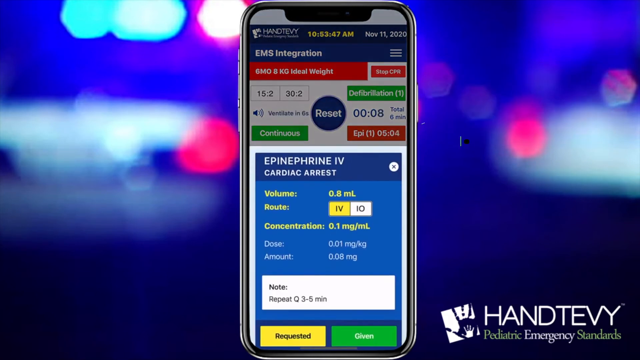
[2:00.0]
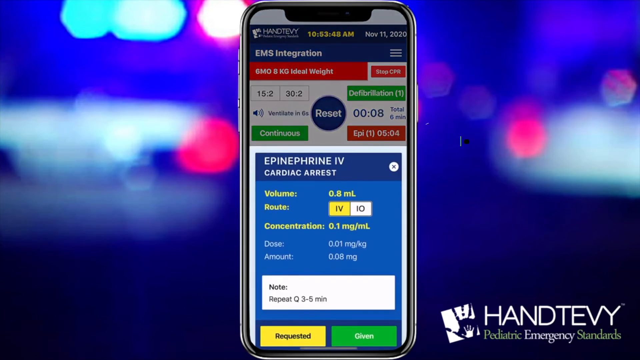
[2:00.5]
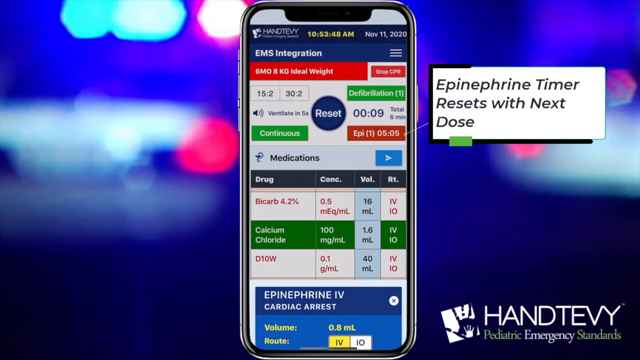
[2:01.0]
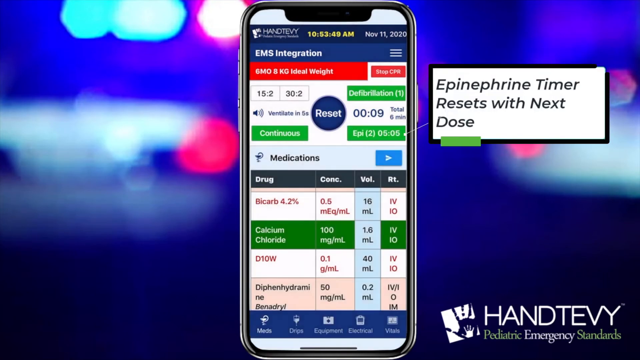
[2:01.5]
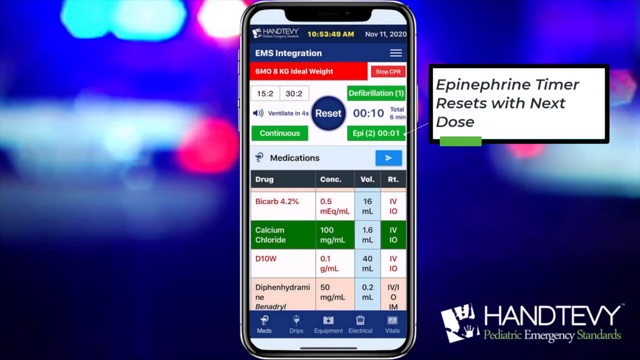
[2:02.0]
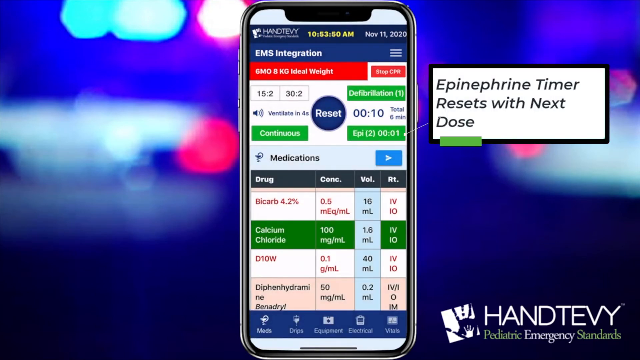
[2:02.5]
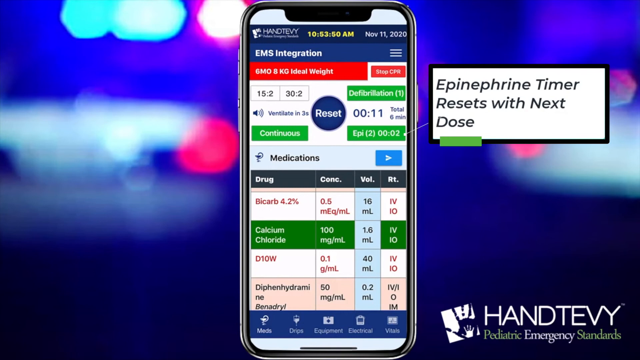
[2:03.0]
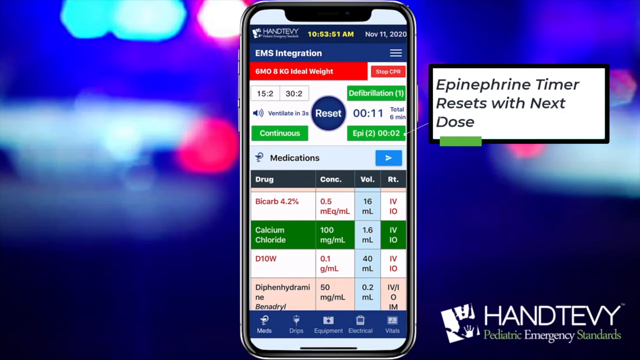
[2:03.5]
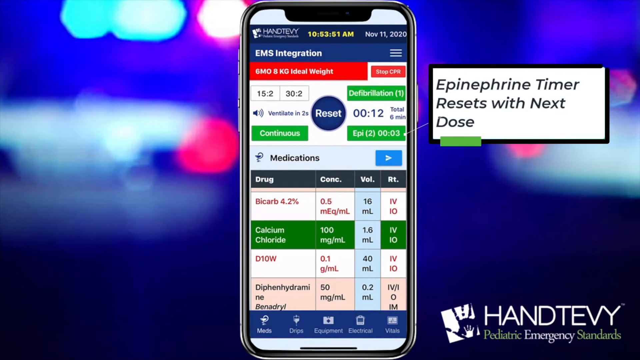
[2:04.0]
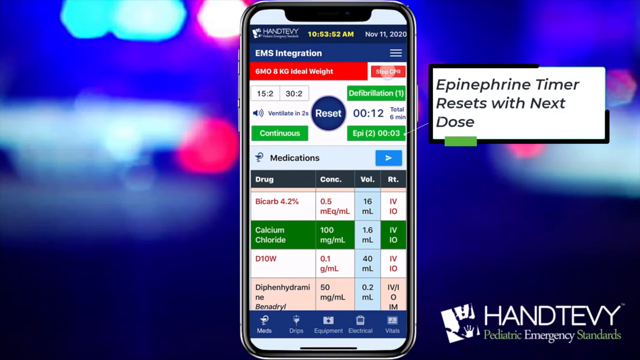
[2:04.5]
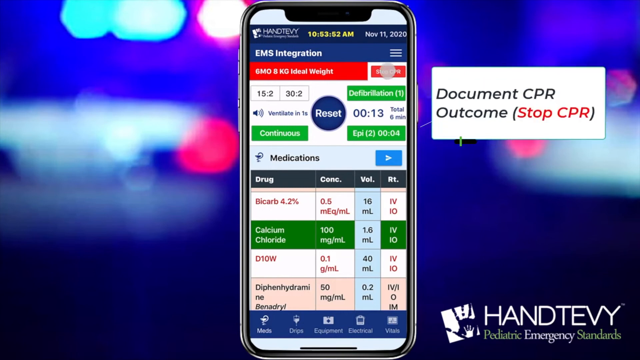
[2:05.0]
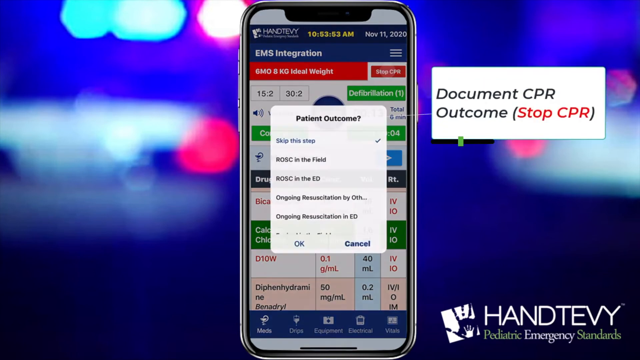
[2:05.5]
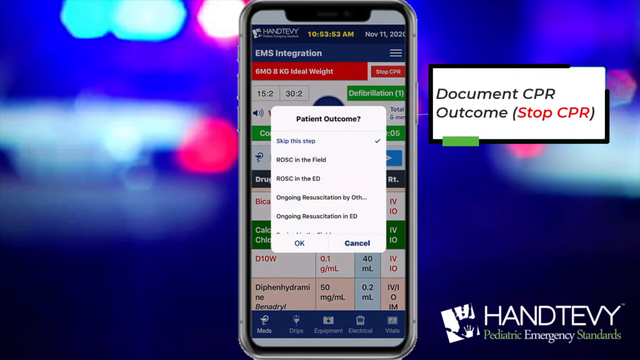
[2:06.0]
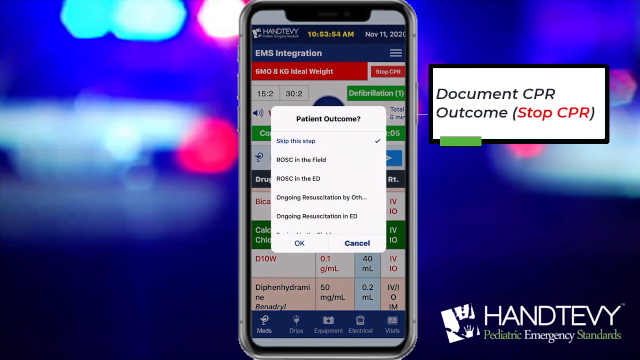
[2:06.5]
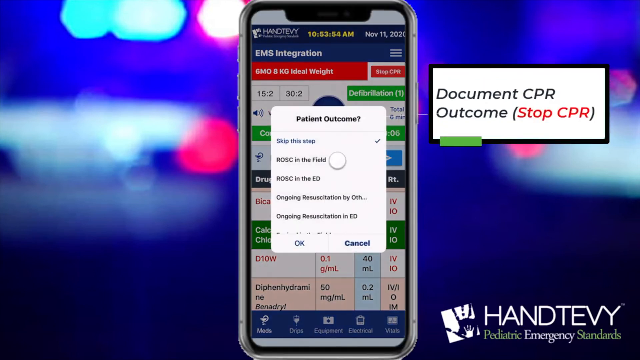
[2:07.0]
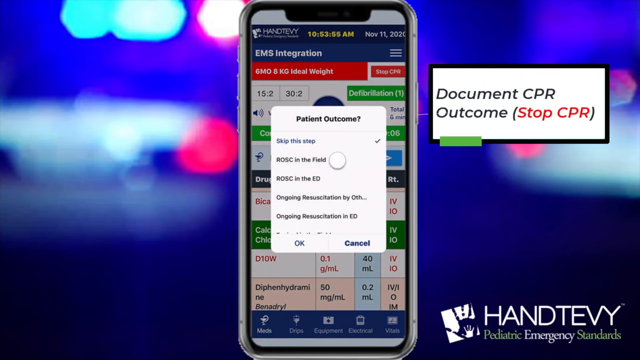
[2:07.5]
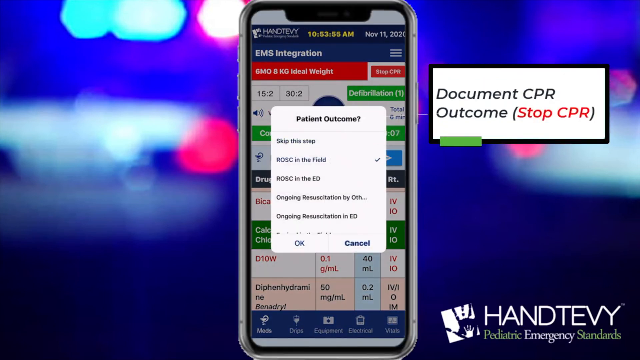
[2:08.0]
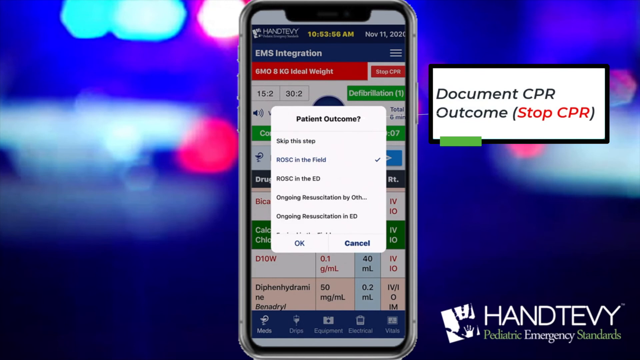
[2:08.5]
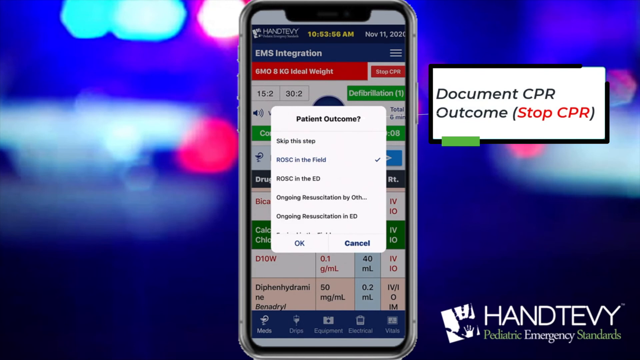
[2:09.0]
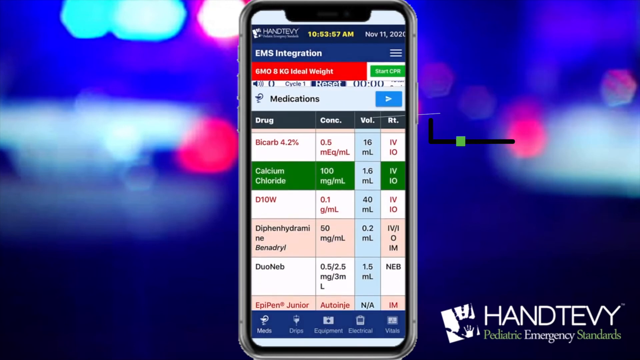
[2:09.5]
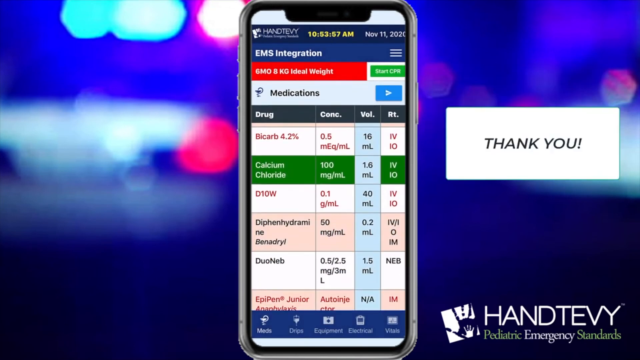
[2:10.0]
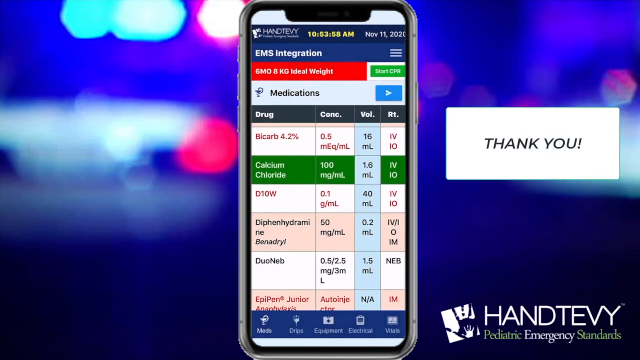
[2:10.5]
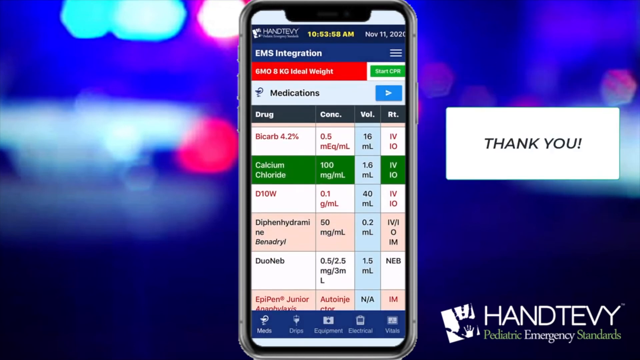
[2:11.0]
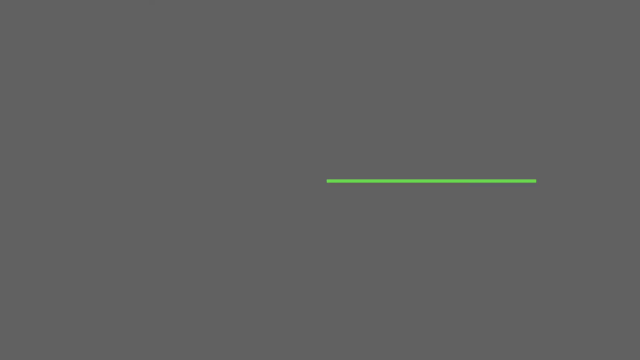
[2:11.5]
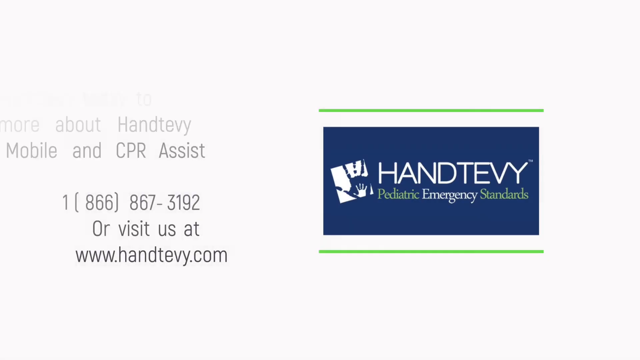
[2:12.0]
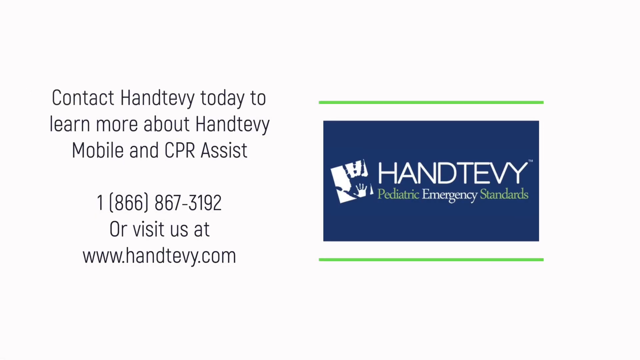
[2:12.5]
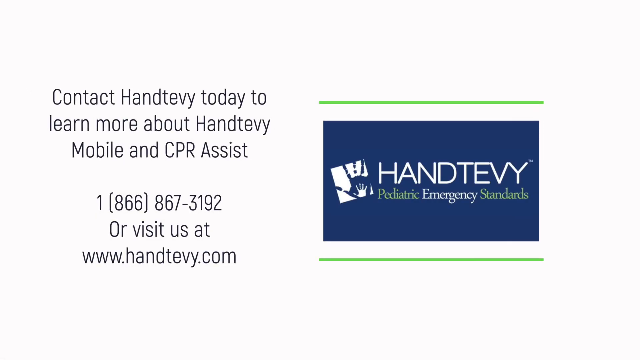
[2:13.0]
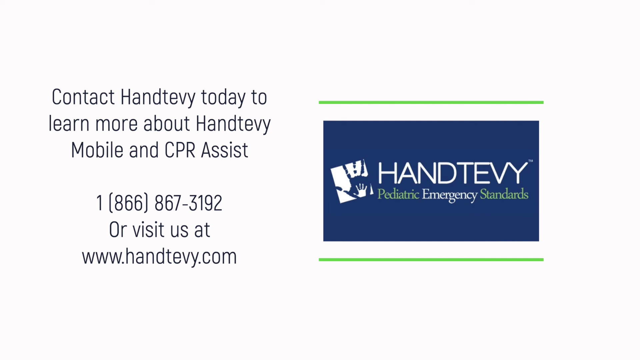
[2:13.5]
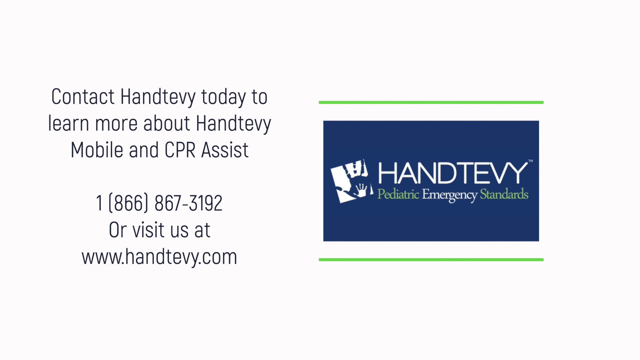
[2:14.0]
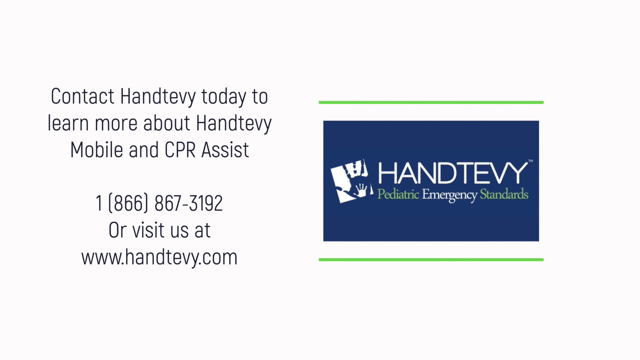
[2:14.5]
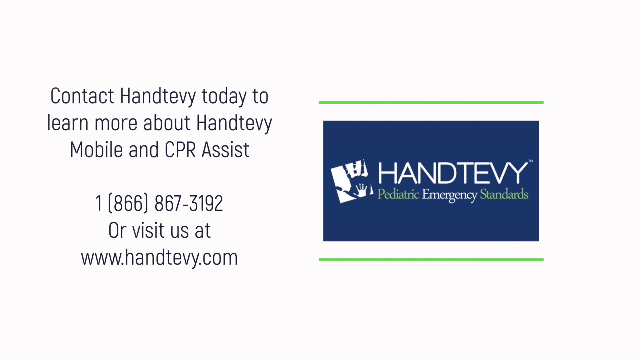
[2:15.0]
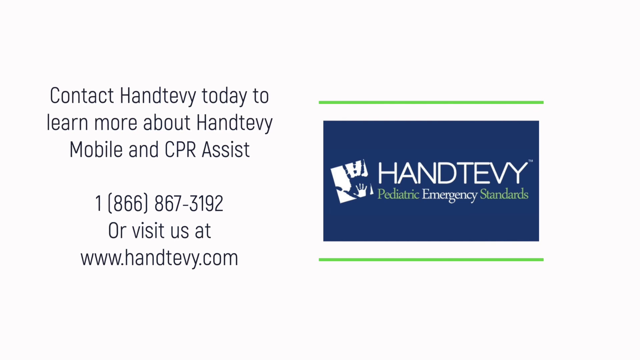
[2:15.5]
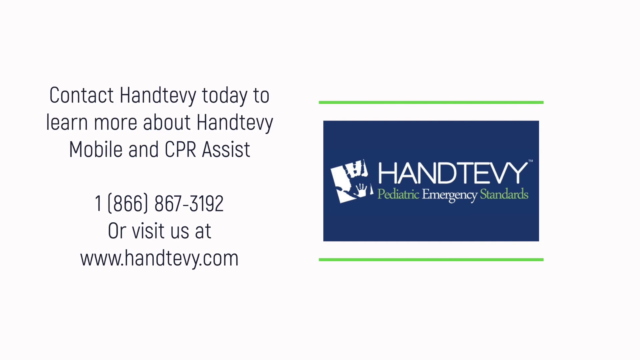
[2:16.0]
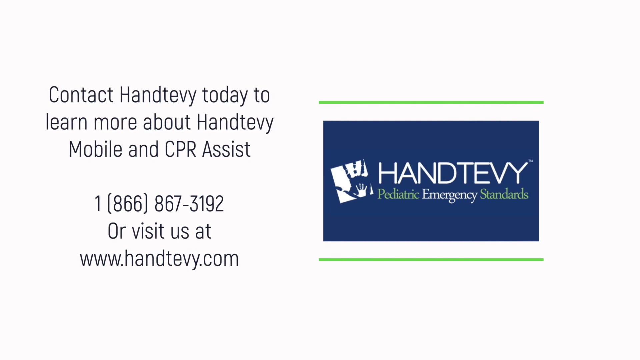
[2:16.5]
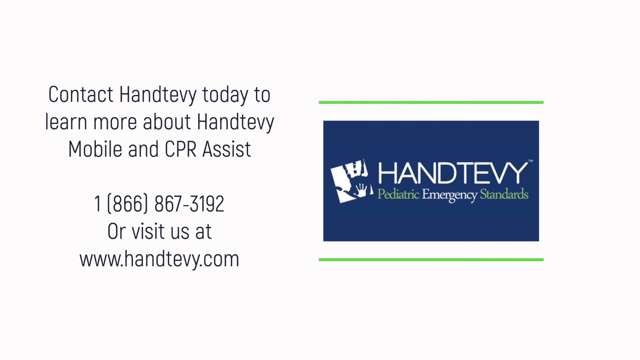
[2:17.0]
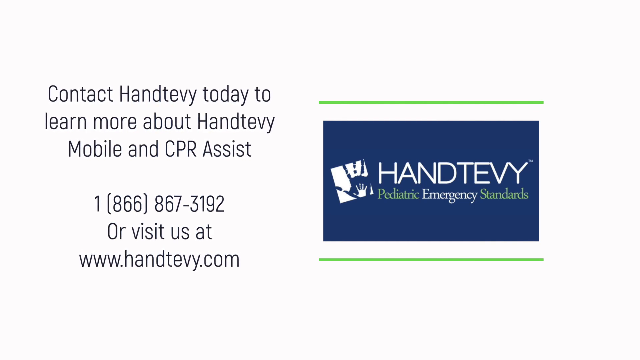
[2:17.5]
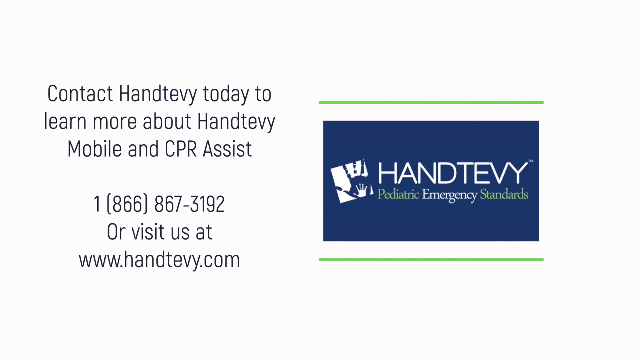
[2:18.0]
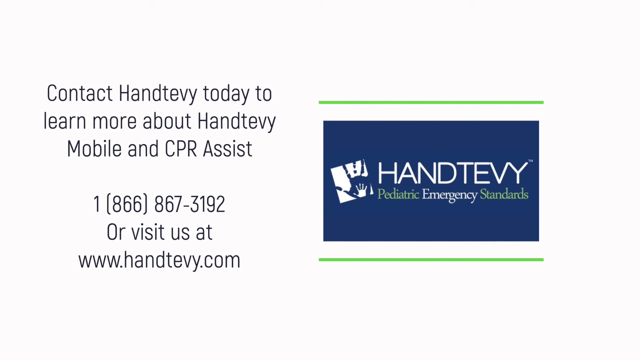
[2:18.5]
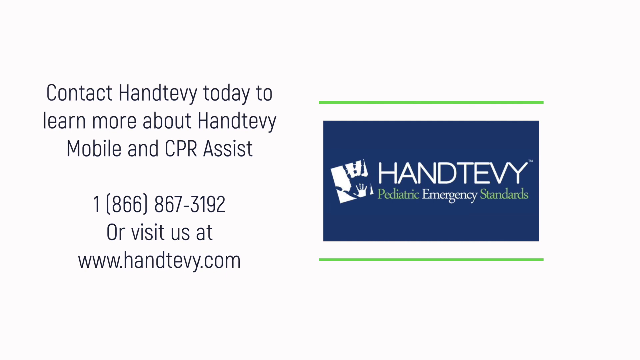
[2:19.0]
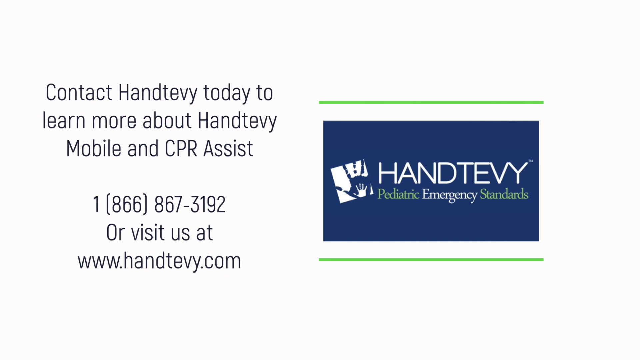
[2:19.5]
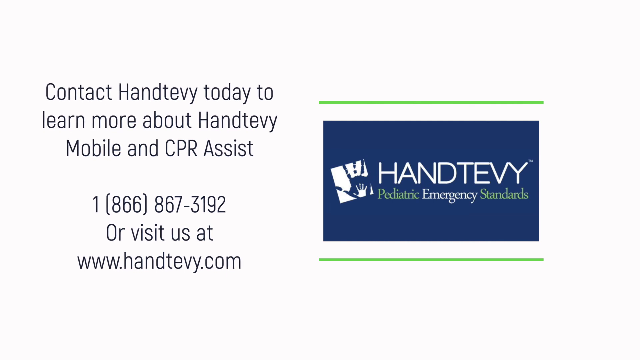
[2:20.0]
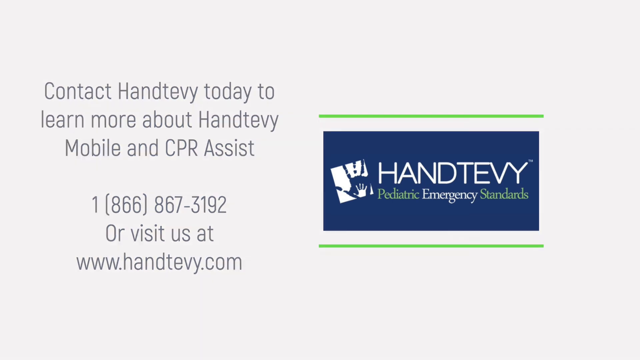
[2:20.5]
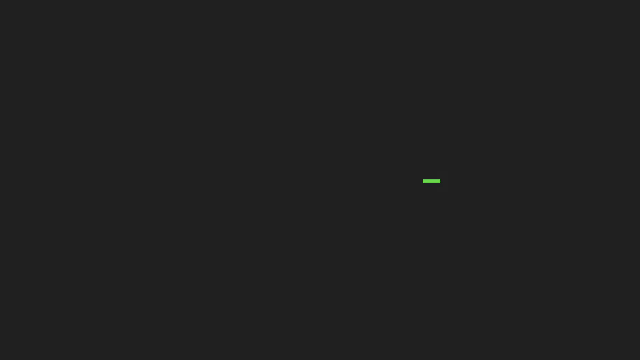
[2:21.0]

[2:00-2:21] A screen shows what looks like the screen of an iPhone with an application open that assists EMS workers. At the beginning, it shows them administering epinephrine for cardiac arrest. A text box appears on the right side reading "Epinephrine timer resets with next dose," which changes to read "Document CPR Outcome Stop CPR." As these boxes change, the boxes on the simulated phone screen change too; one reads "Patient Outcome." A final text box appears reading "ThankYou!" The final screen shows the logo for Handtevy Pediatric Emergency Standards and, on the left, contact information for the company reading "Contact Handtevy today to learn more about Handtevy Mobile and CPR Assist 1 [866] 867-3192 Or visit us at www.handtevy.com." The Handtevy logo includes a white box with a blue child's handprint and a smaller white handprint within it.